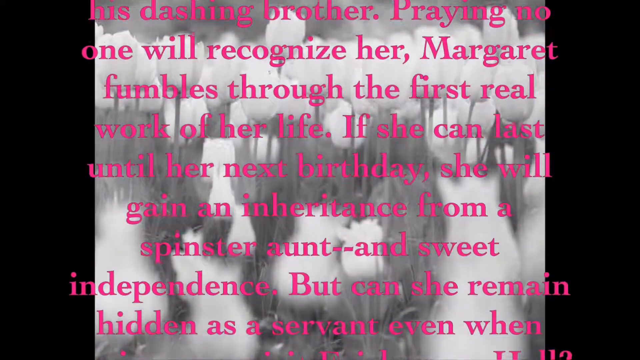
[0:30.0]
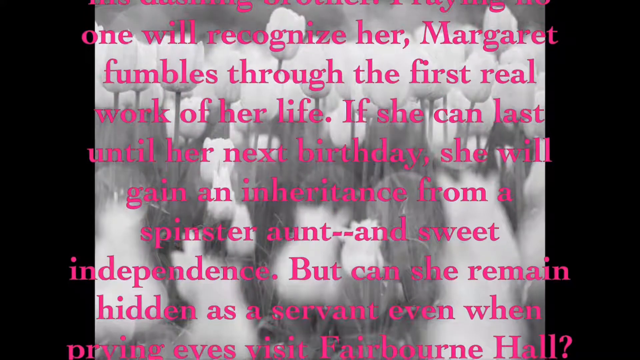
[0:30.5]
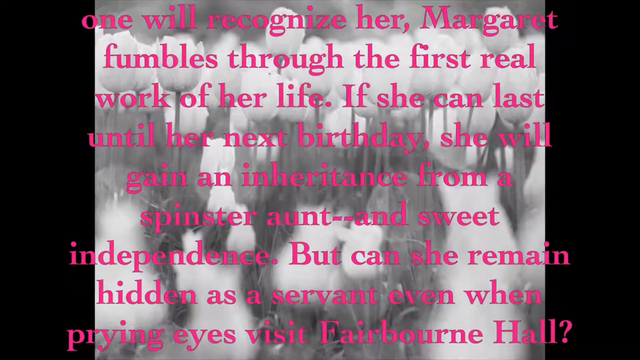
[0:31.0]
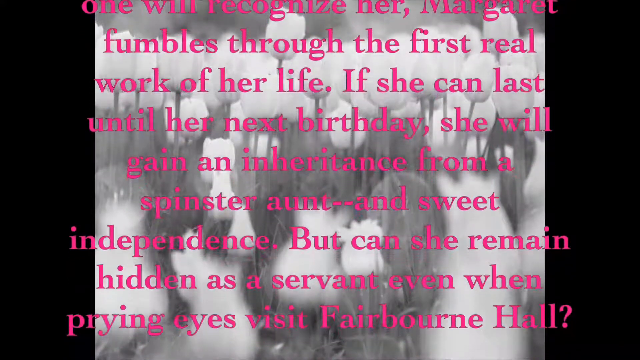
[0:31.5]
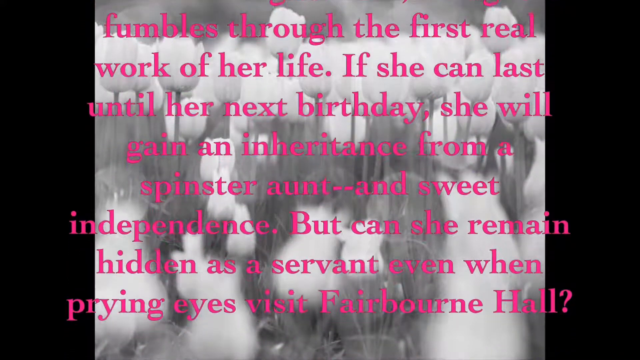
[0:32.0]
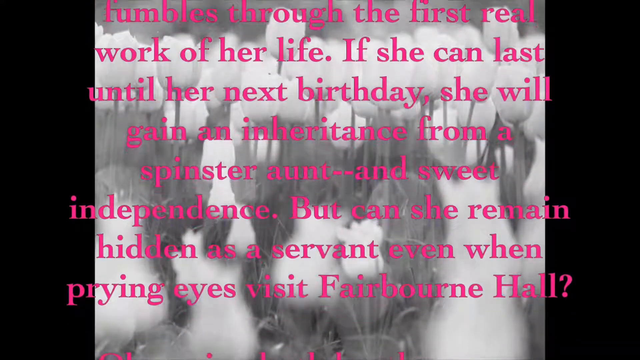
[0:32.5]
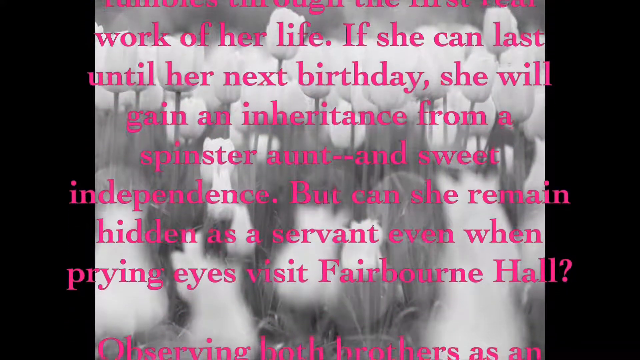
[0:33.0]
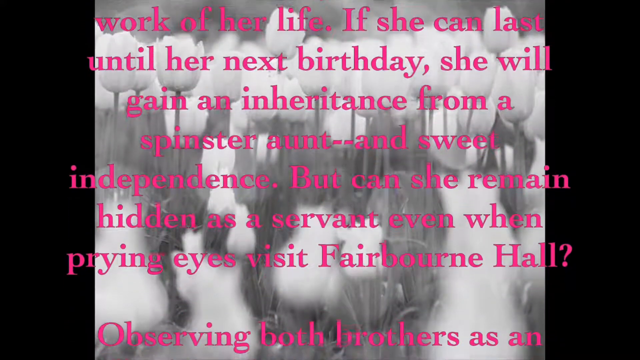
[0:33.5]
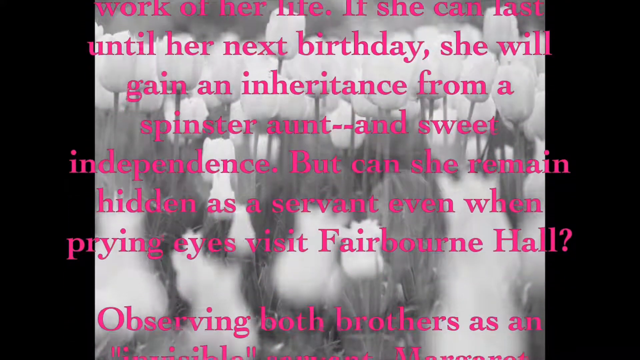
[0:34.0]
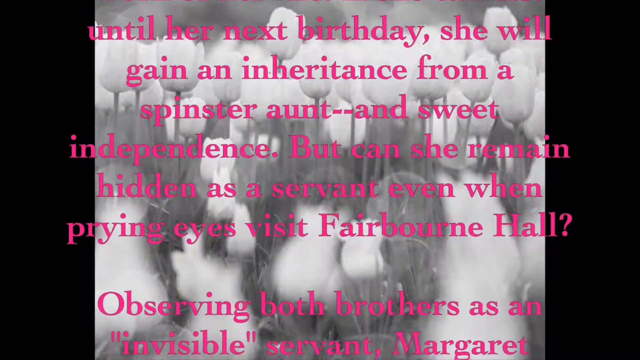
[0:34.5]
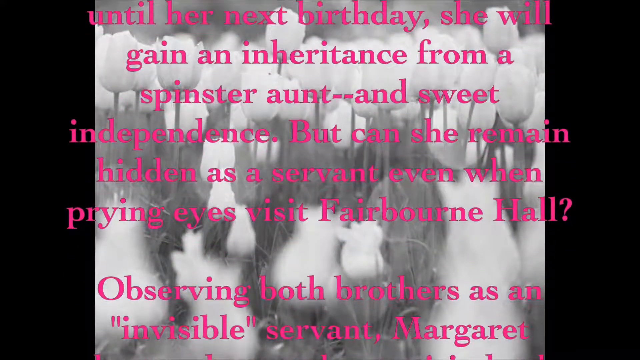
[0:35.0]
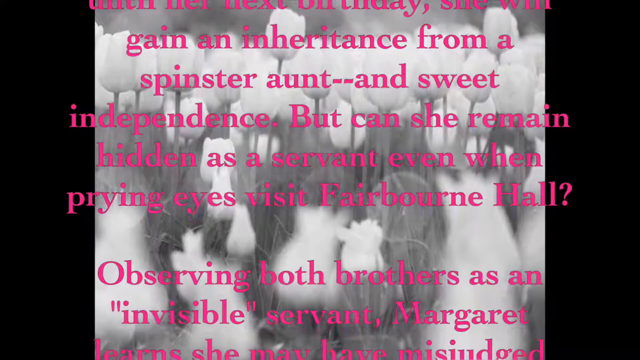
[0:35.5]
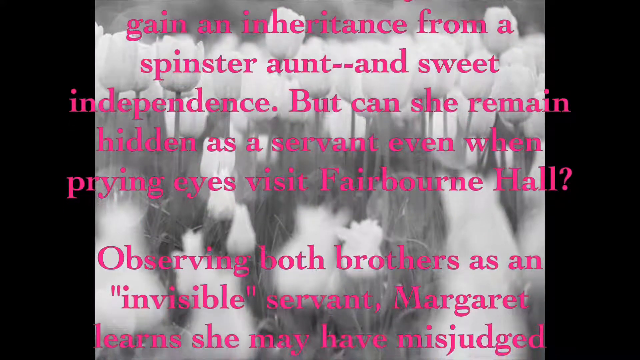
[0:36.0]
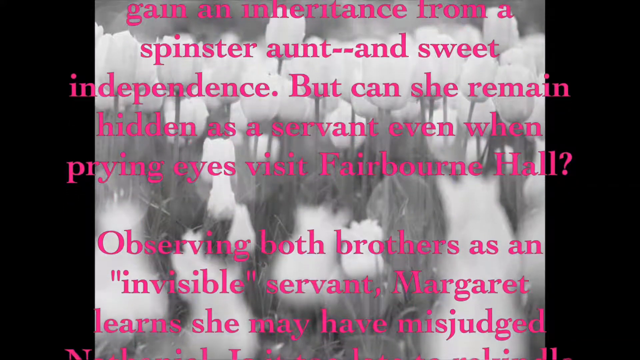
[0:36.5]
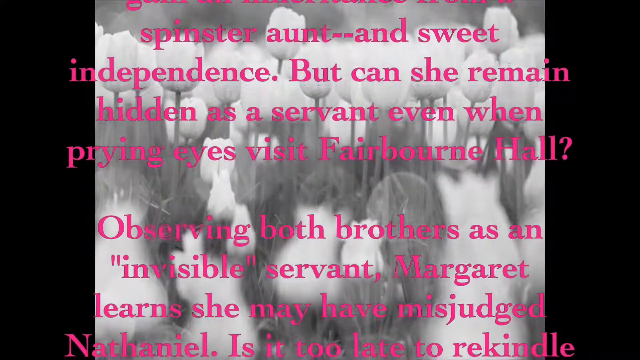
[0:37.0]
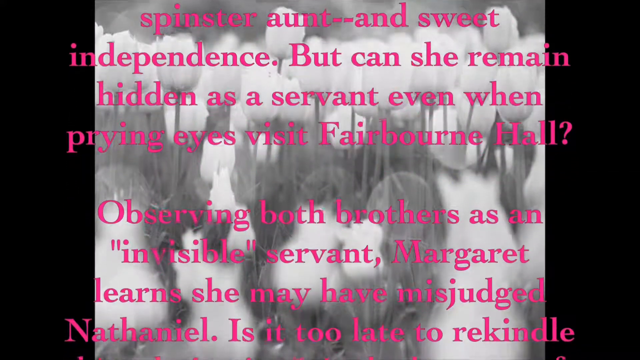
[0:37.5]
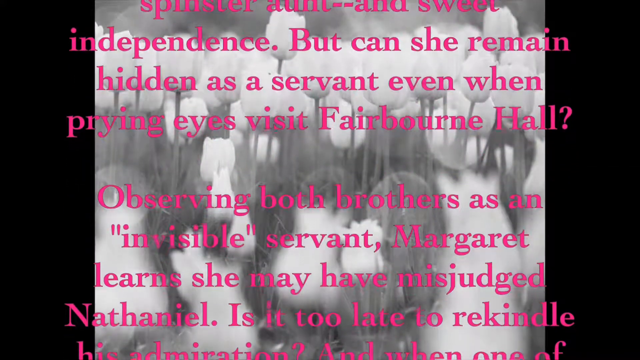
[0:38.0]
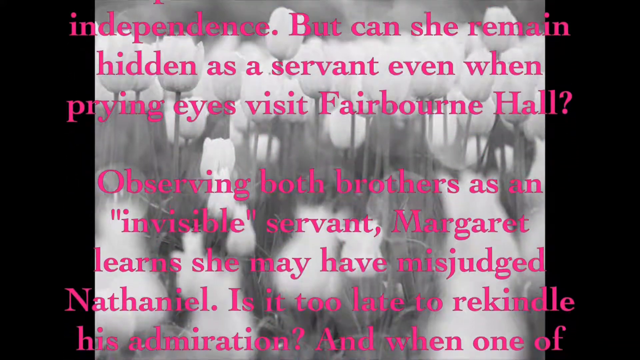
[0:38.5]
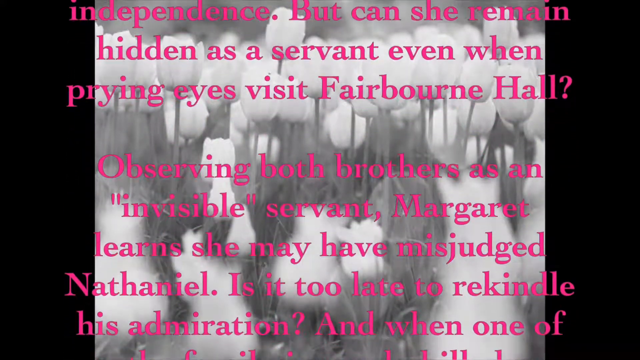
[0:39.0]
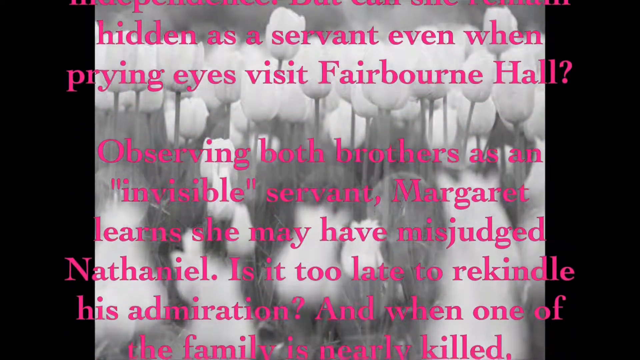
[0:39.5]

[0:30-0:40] The scrolling text, apparently a description, continues: "and sweet independence, but can she remain hidden as a servant even when prying eyes visit Fairbourn Hall" and "observing both brothers as an invisible servant, Margaret learns she may have misjudged Nathaniel." The writing goes on a little more, seemingly telling the story, with the words moving up the screen. There seems to be some type of faded image in the background, and on each side there seems to be a dark area.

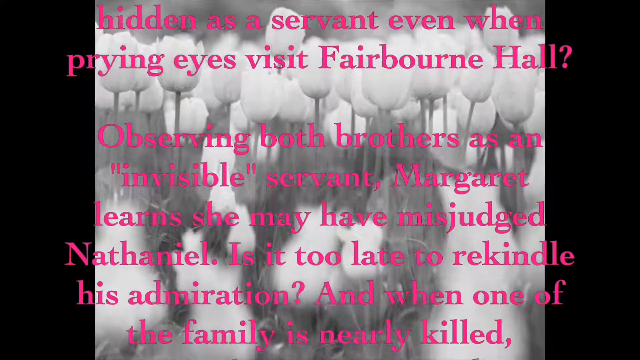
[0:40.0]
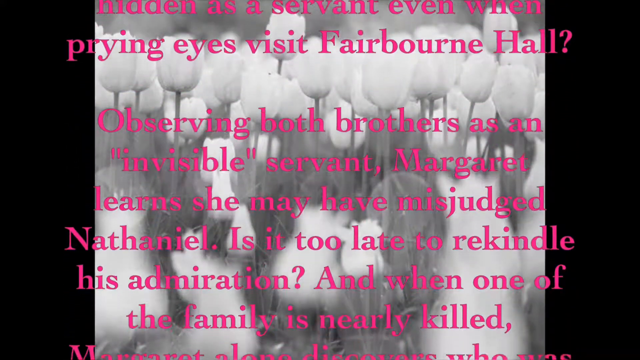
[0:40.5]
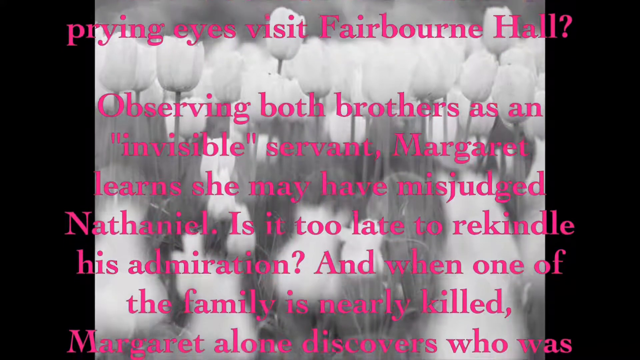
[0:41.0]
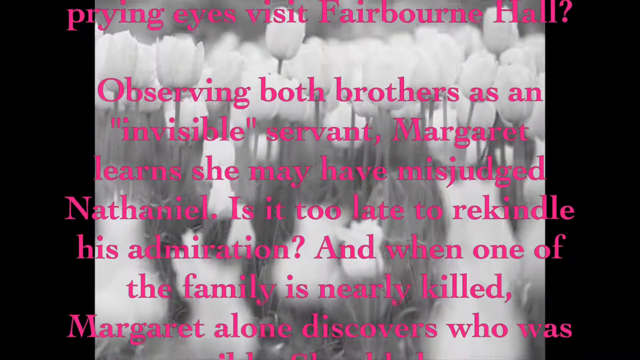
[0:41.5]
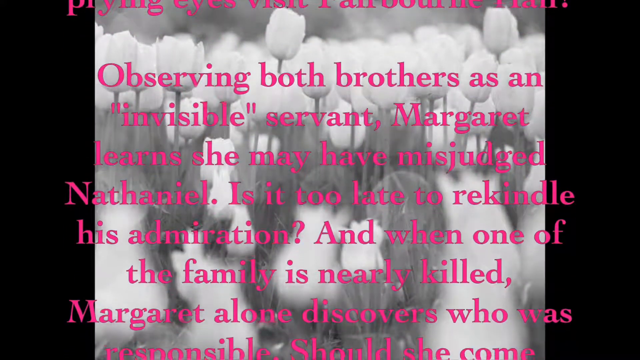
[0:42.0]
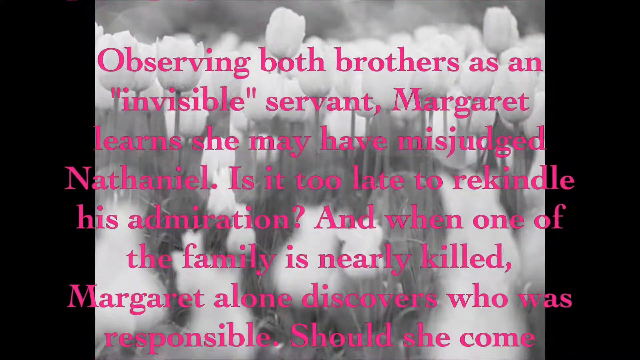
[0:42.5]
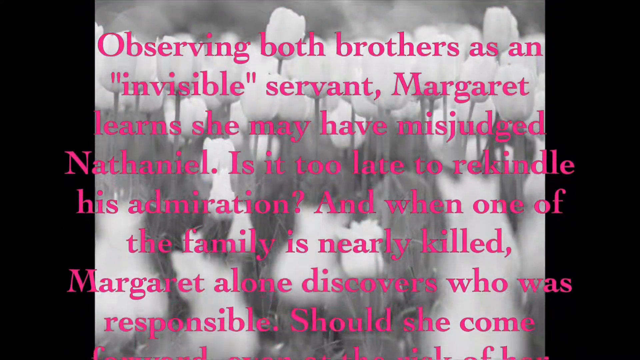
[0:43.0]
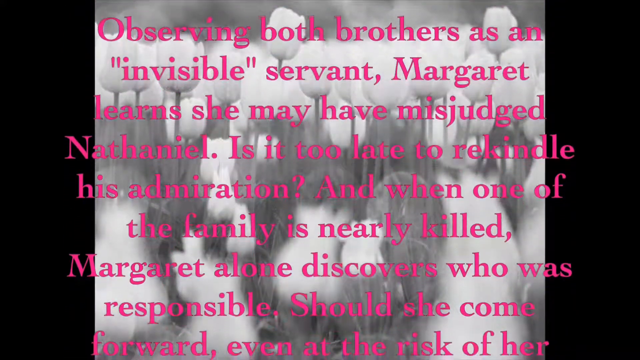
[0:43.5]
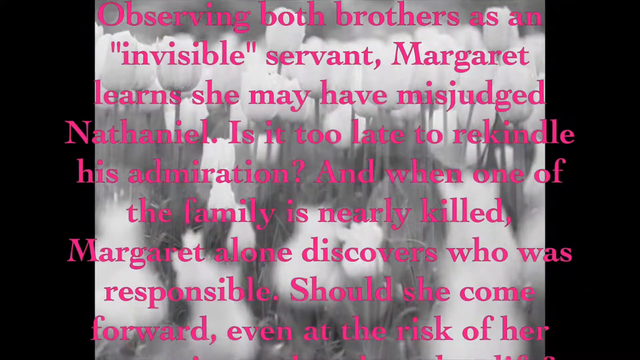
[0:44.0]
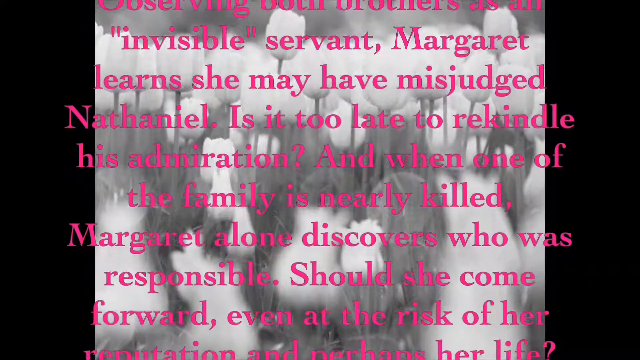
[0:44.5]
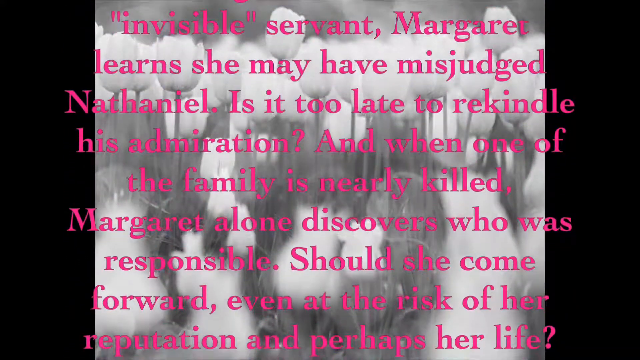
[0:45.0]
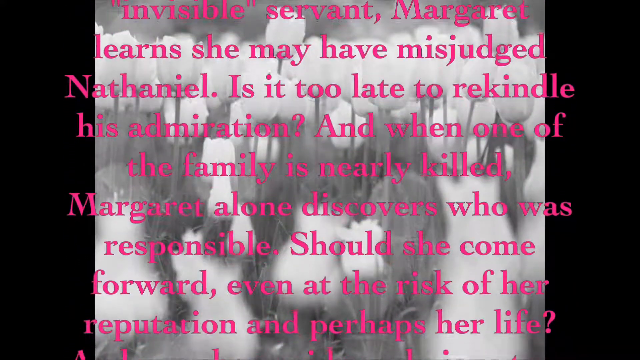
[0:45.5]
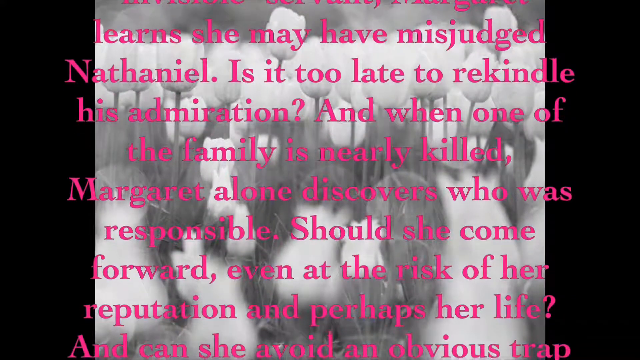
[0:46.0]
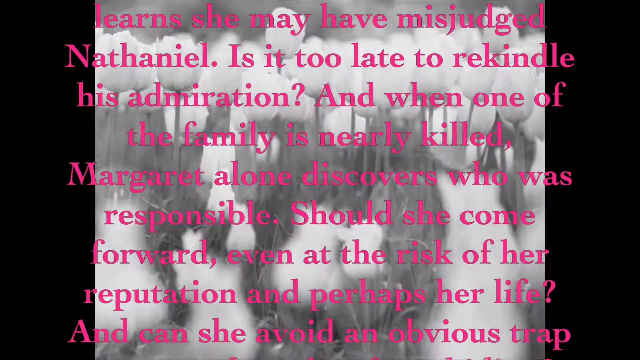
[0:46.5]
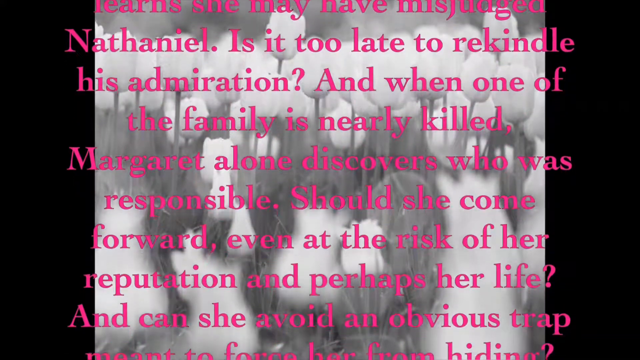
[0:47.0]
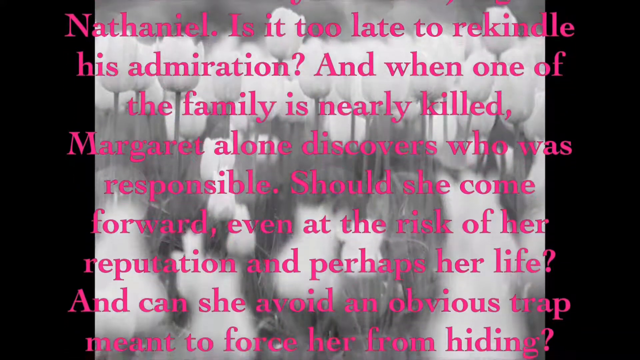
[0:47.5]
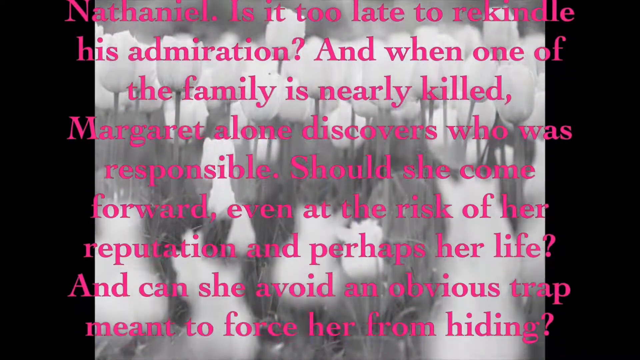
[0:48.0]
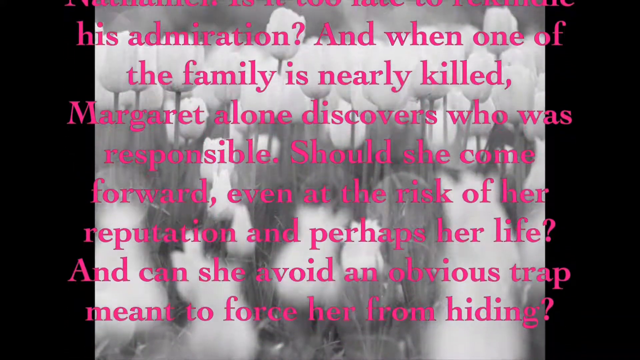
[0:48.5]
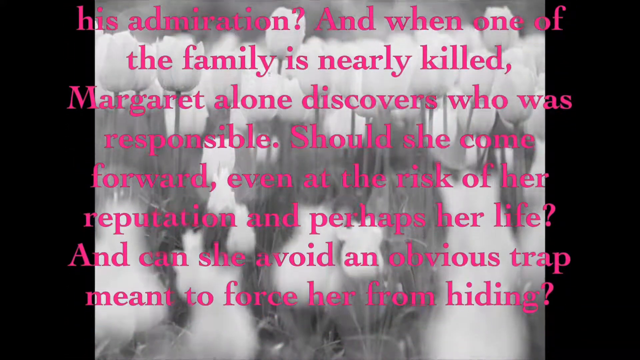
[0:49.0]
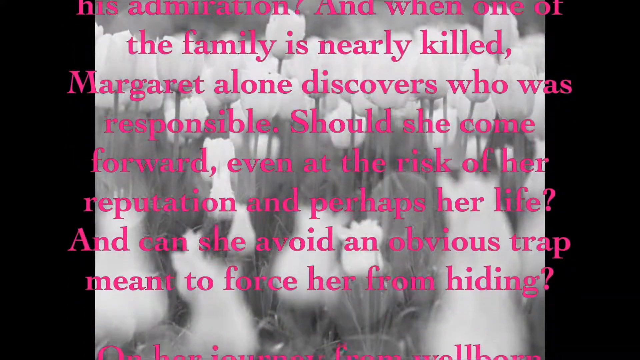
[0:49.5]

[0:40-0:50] The text continues as a description: "observing both brothers as an invisible servant, Margaret learns she may have misjudged Nathaniel, is it too late to rekindle his admiration, and when one of the family is nearly killed, Margaret alone discovers who was responsible. Does she come forward even at the risk of her reputation, and perhaps her life," and then goes on a little further. It is presented in a storytelling fashion with just the words and no video action in the background, only footage of white flowers, apparently white roses, that seem to be seen at the beginning.